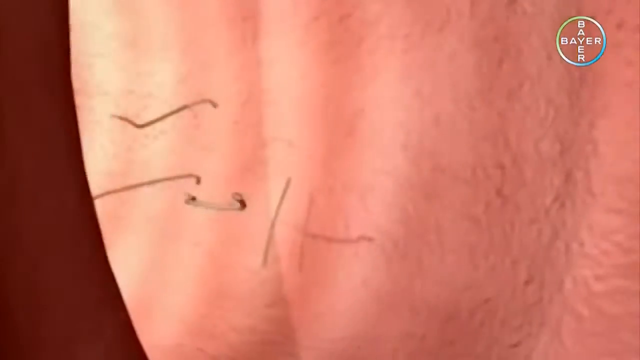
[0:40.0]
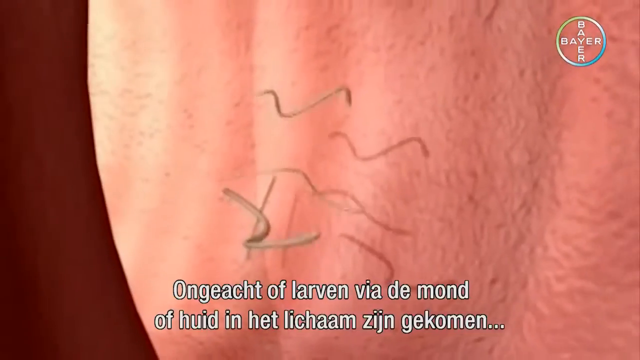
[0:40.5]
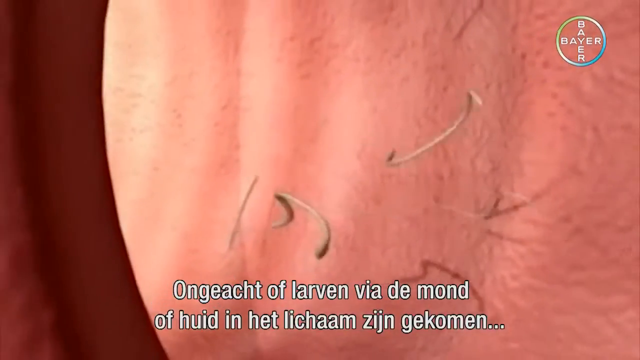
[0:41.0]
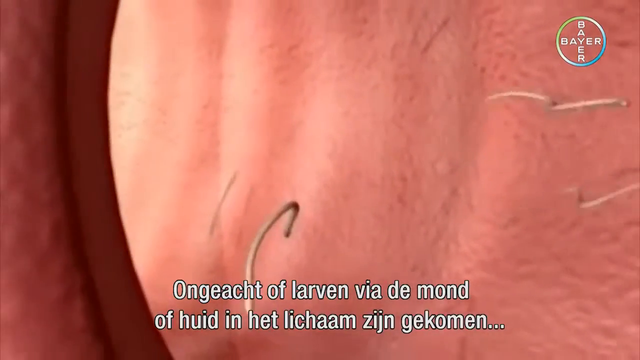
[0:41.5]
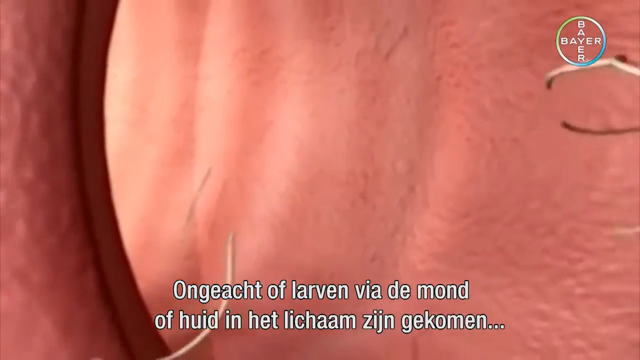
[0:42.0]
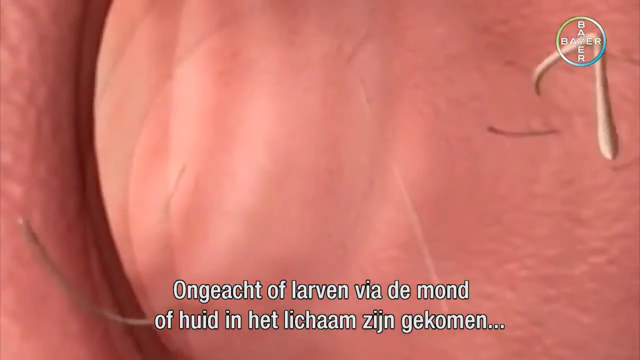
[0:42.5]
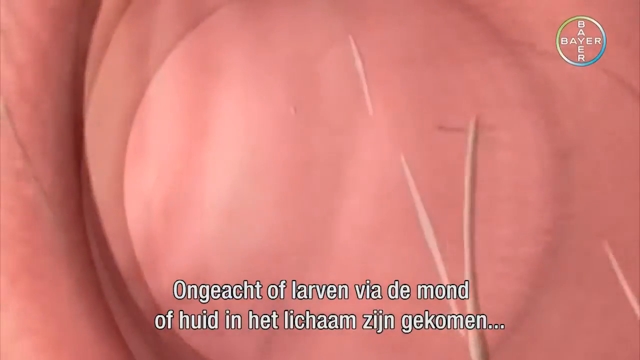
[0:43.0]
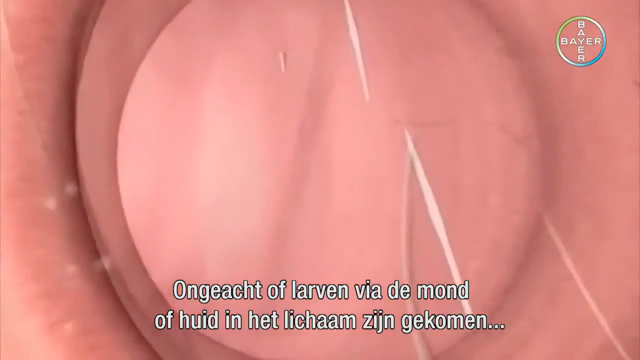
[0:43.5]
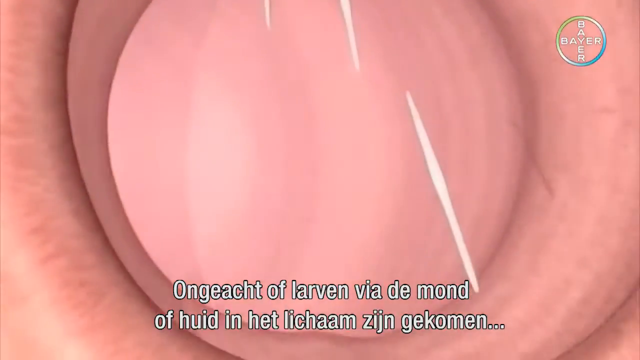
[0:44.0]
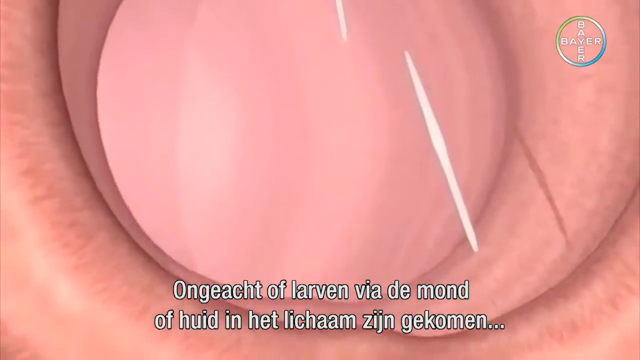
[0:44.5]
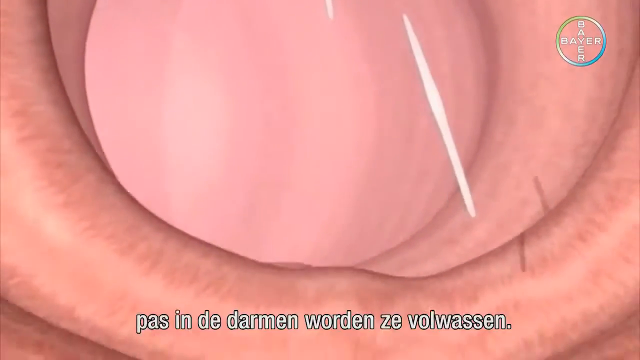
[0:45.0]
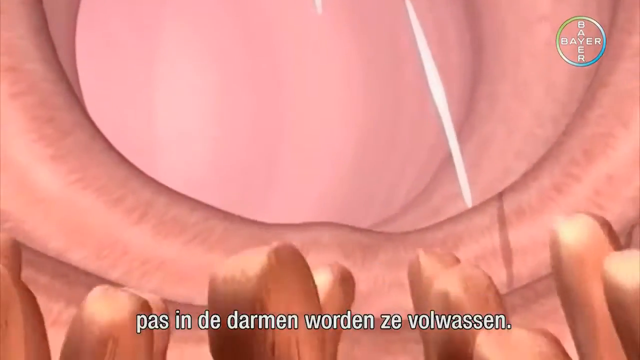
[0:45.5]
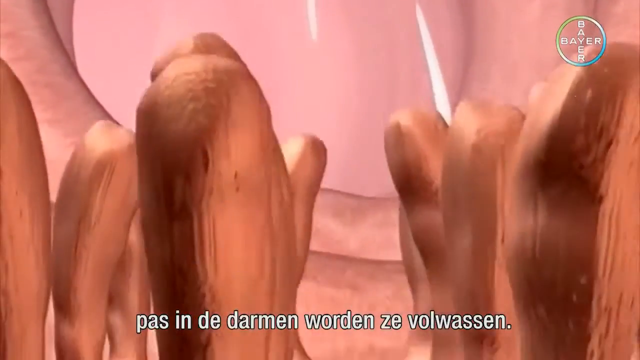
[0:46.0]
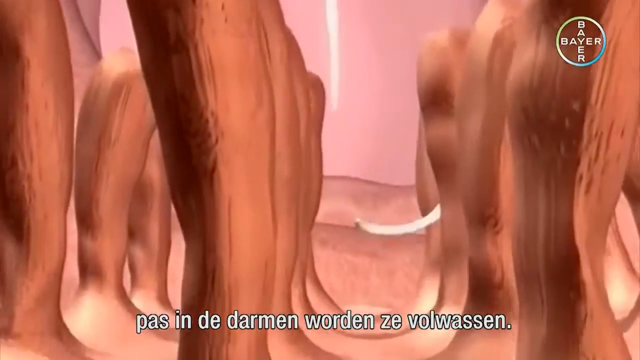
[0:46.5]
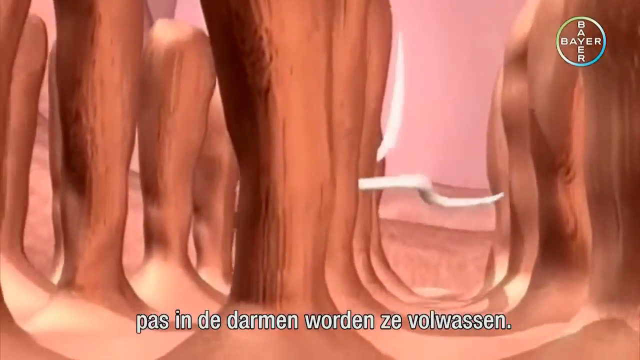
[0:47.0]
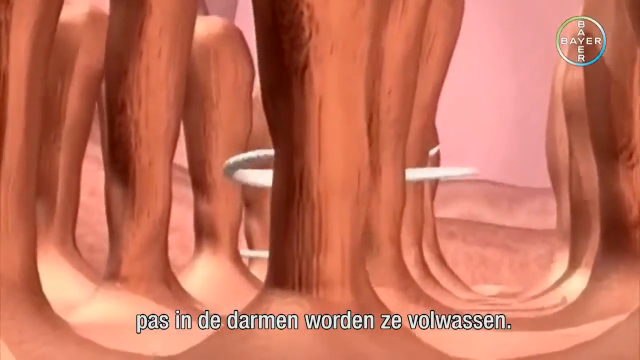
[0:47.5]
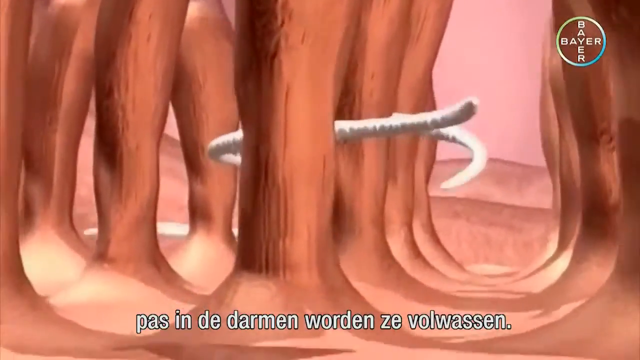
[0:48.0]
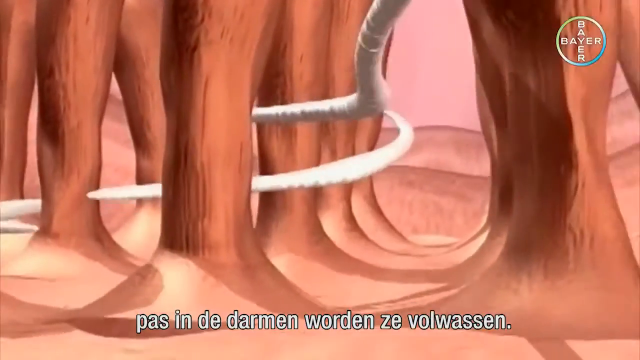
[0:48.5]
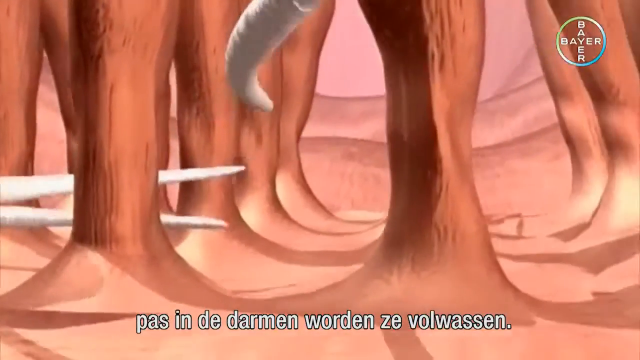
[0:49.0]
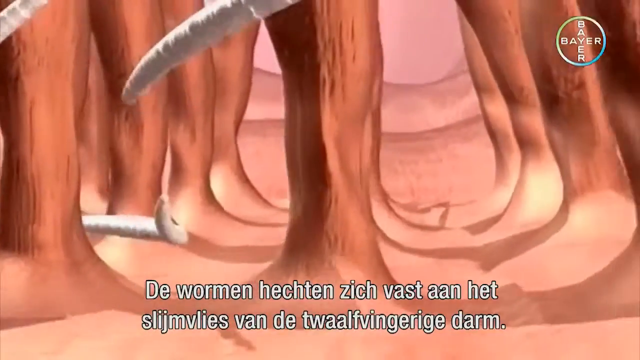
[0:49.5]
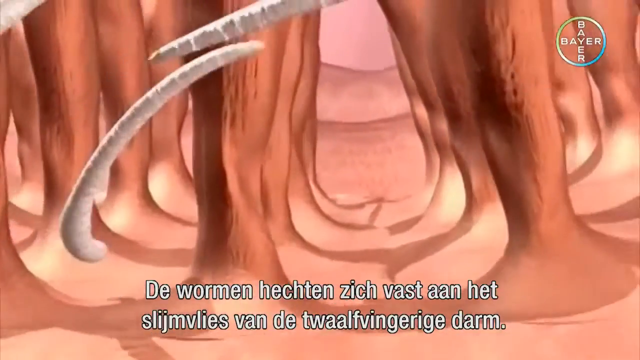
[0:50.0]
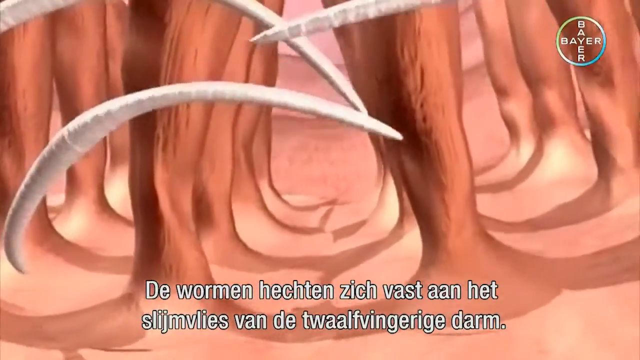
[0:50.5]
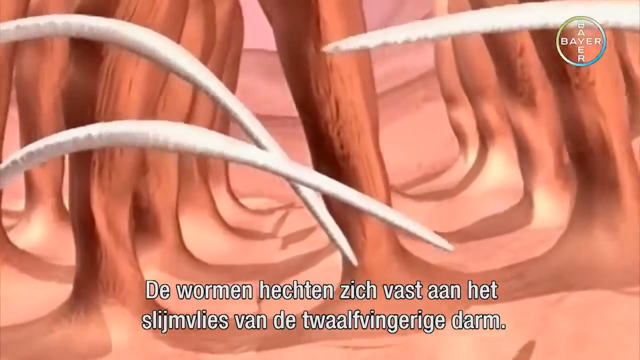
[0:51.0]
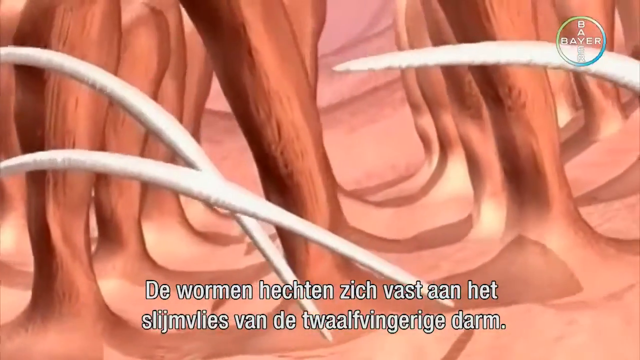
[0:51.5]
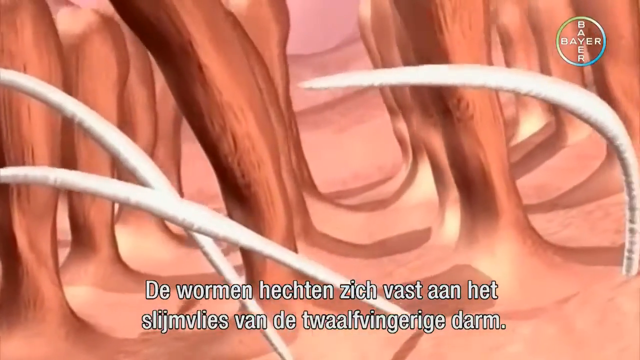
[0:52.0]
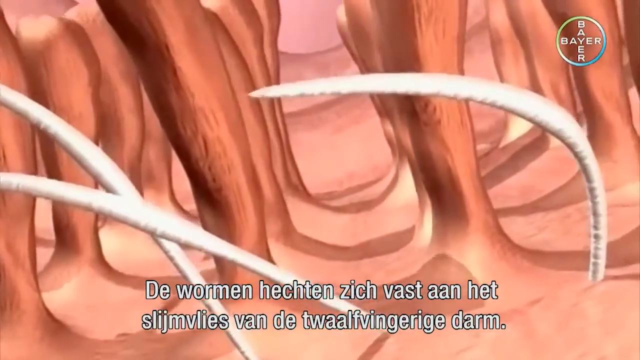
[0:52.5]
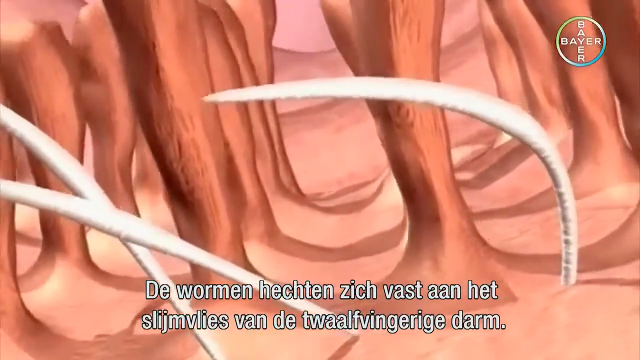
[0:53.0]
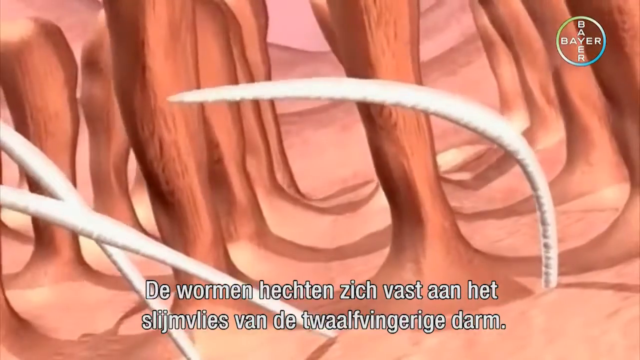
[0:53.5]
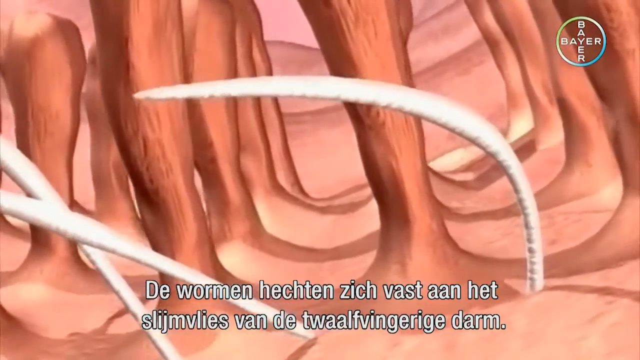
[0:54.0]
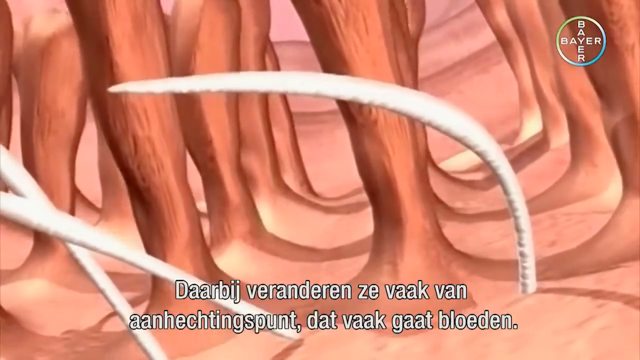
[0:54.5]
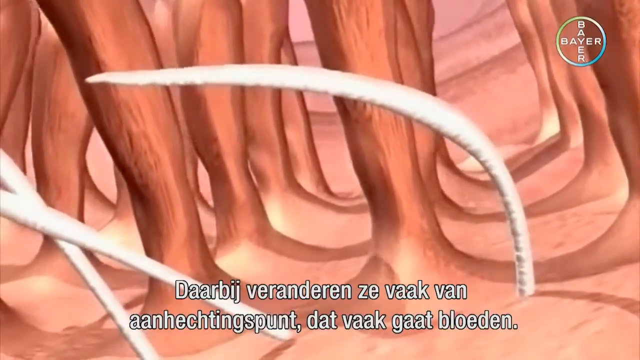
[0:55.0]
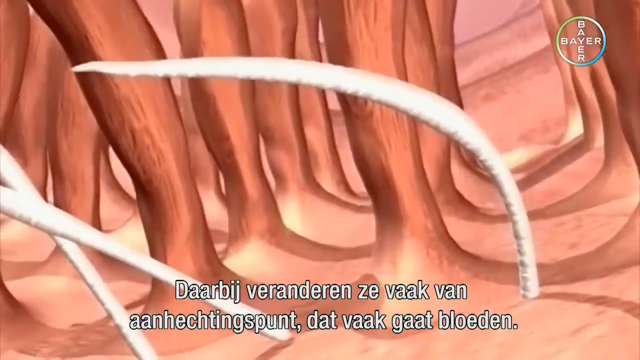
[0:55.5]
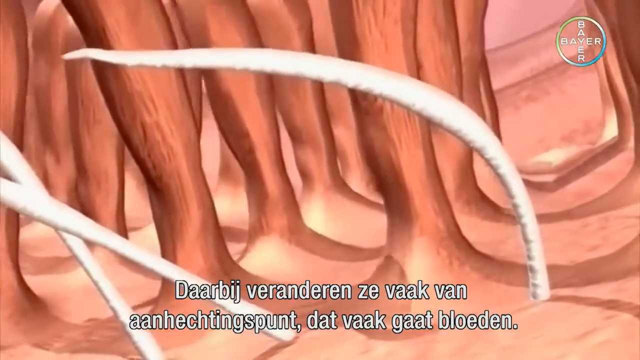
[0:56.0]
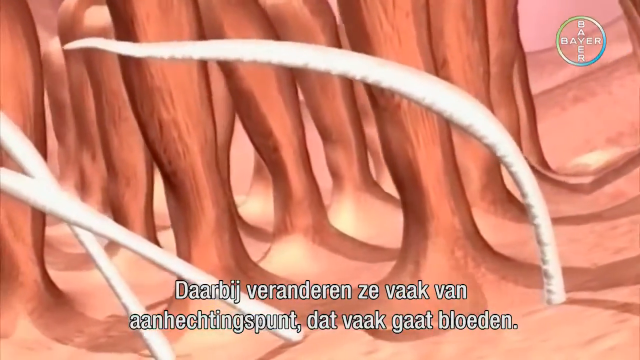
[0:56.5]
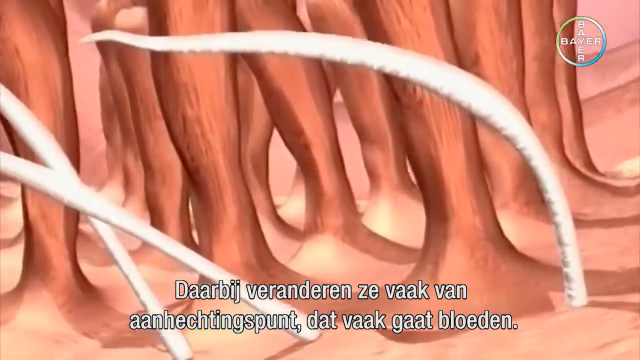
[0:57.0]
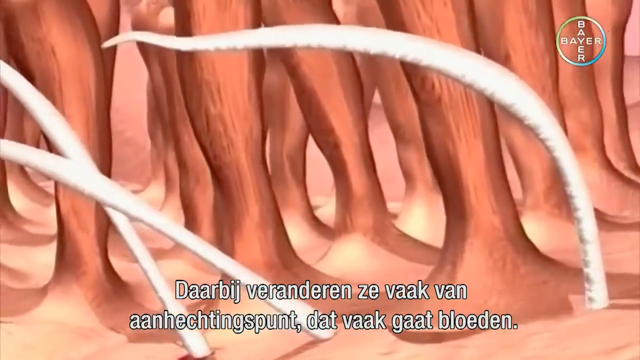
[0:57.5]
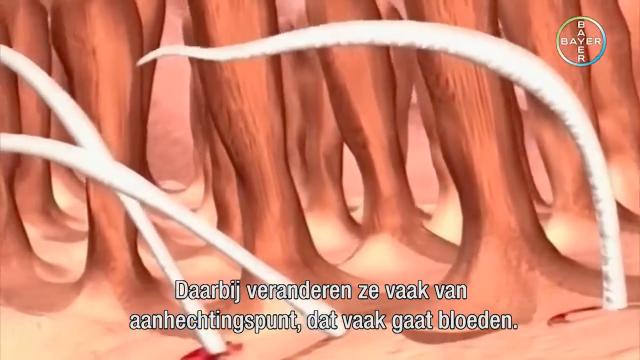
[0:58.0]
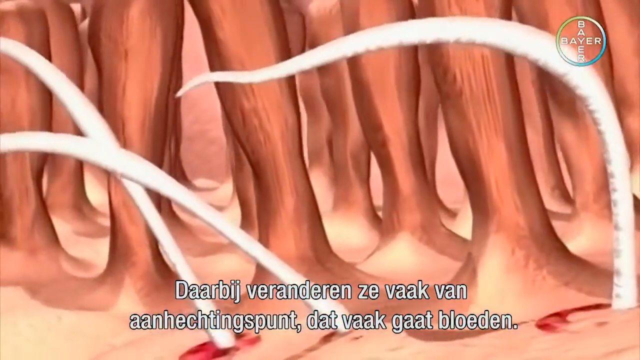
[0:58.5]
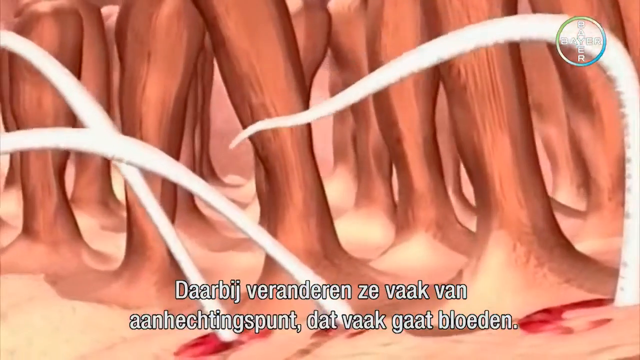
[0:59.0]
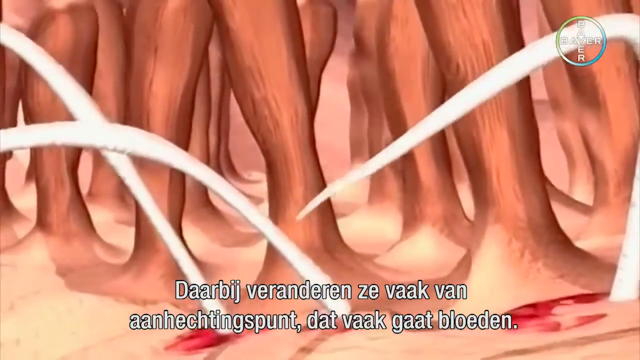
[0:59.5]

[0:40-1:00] Small, apparently white worms wiggle around on a pinkish background while white words pop up at the bottom of the screen. In the upper right corner is a circle with the word "Bayer" in a crisscross pattern, connecting at the Y. The white worms travel down an area where brown things stick upward, swimming around the brown things and connecting themselves to the surface the brown things come up from. Their shadows are visible behind them. As the worms connect, some red appears to pop up on the surface where they attach.